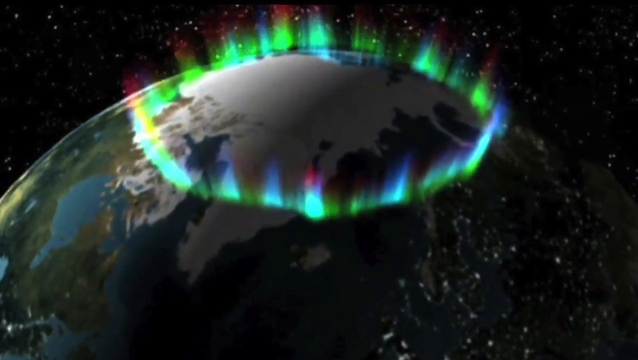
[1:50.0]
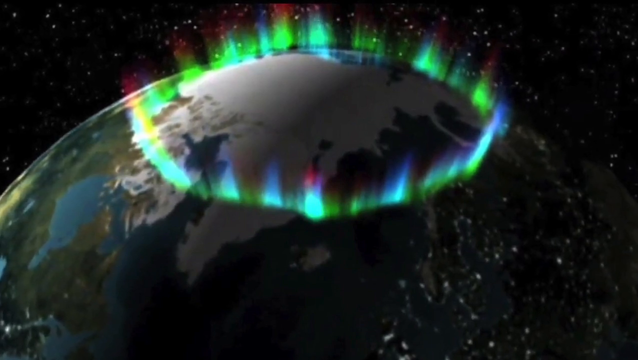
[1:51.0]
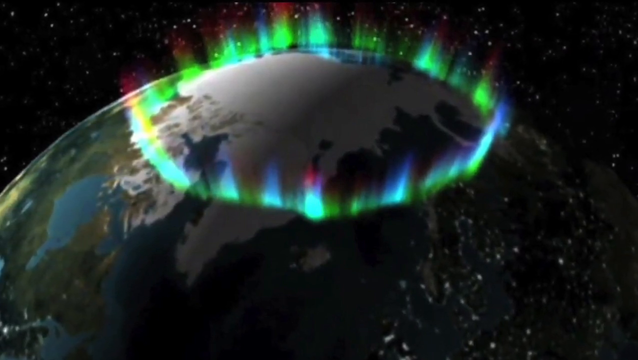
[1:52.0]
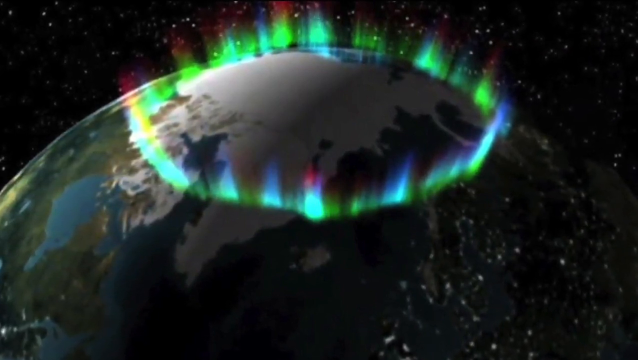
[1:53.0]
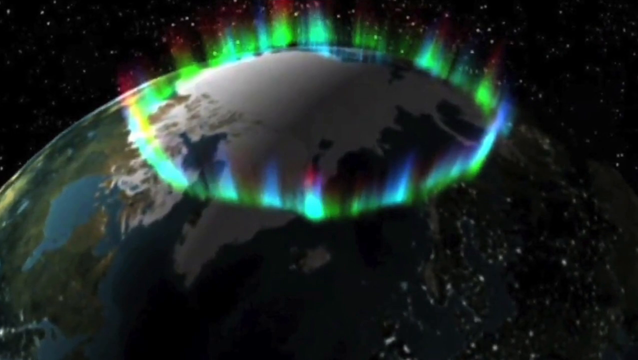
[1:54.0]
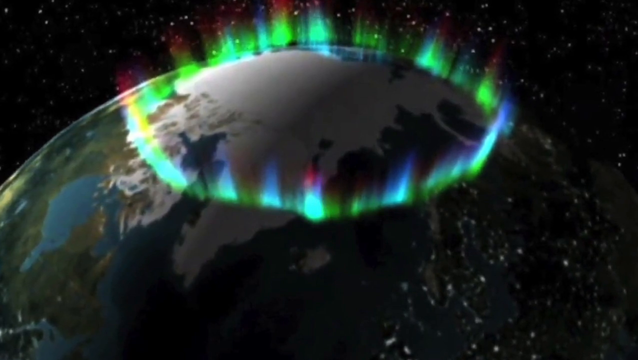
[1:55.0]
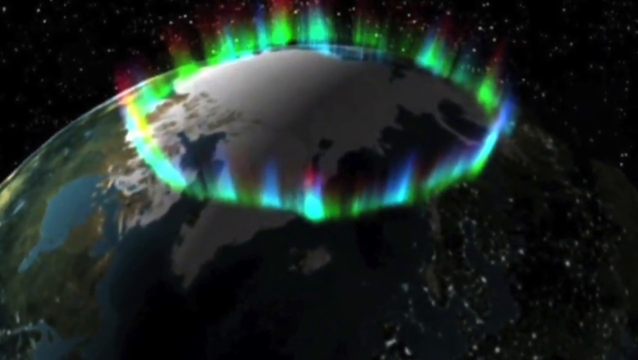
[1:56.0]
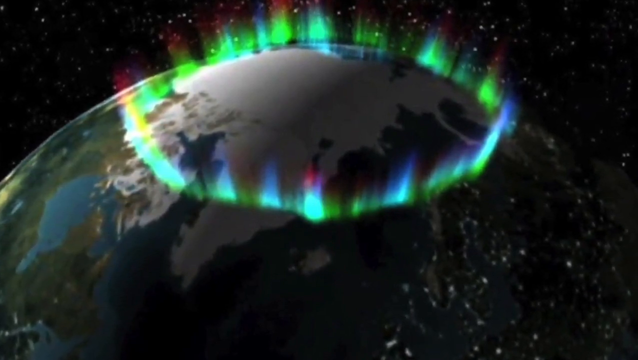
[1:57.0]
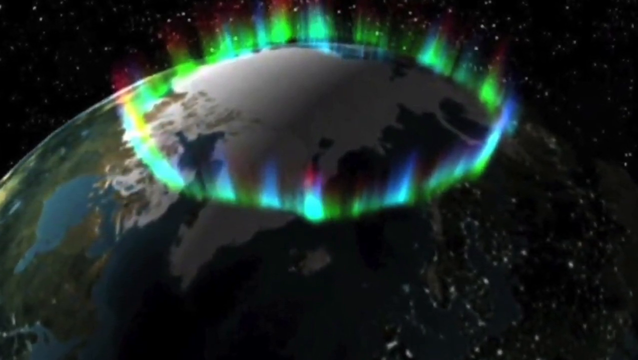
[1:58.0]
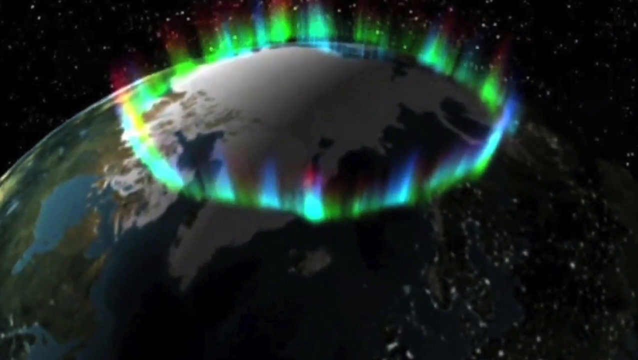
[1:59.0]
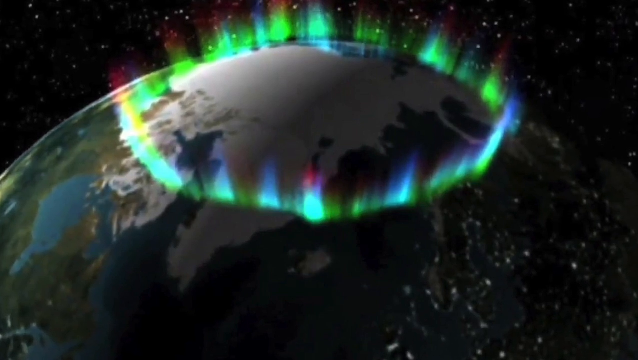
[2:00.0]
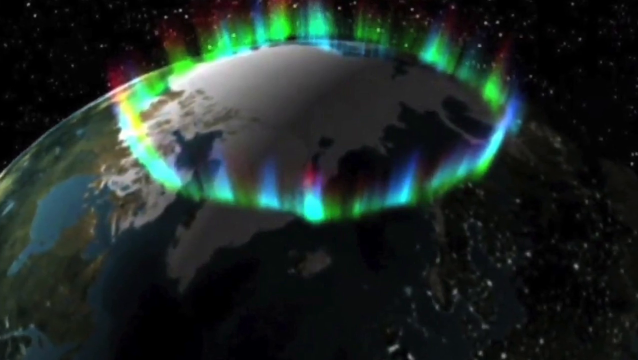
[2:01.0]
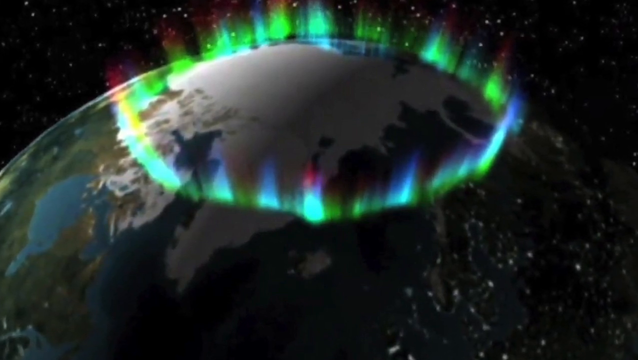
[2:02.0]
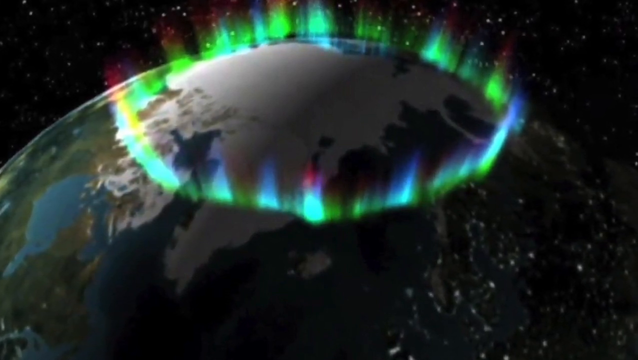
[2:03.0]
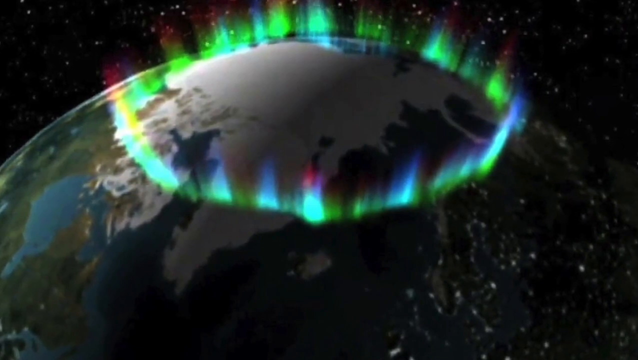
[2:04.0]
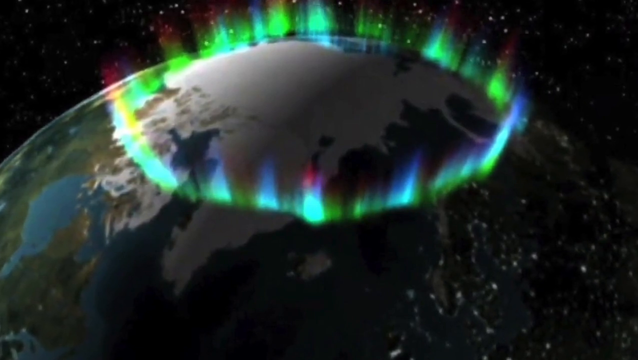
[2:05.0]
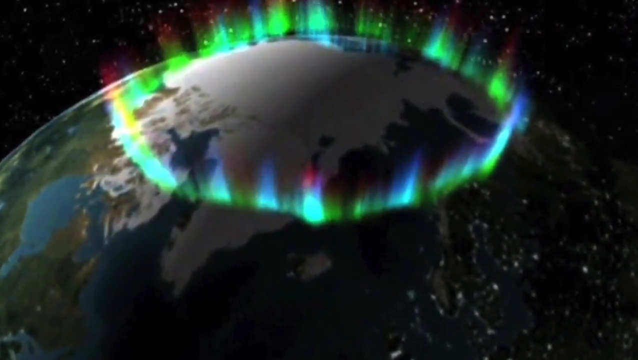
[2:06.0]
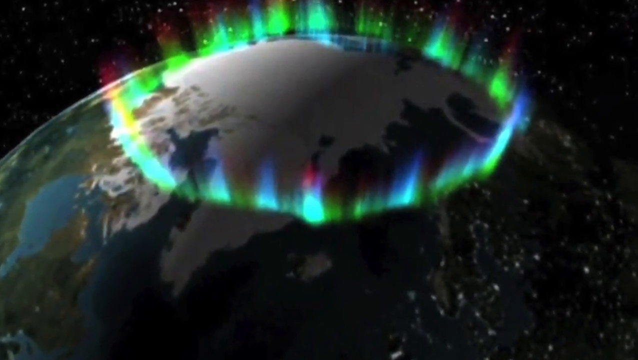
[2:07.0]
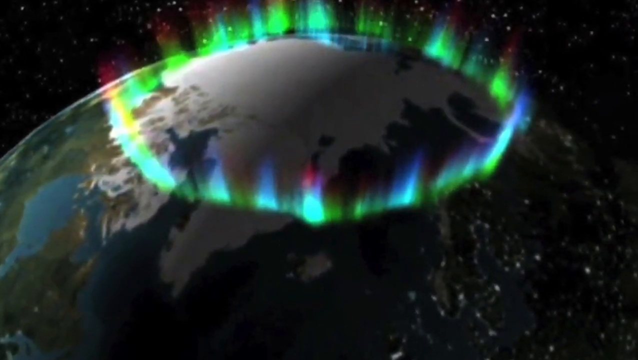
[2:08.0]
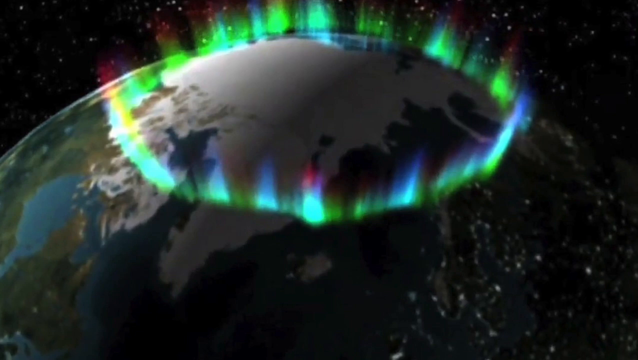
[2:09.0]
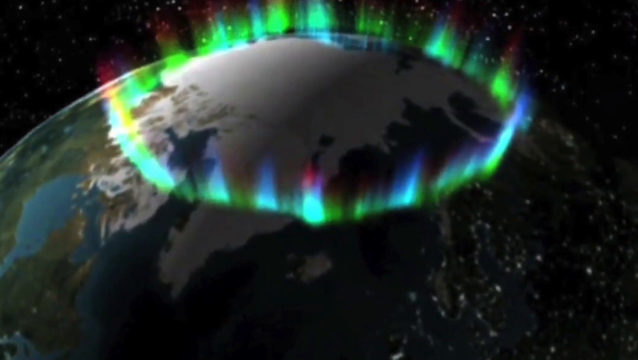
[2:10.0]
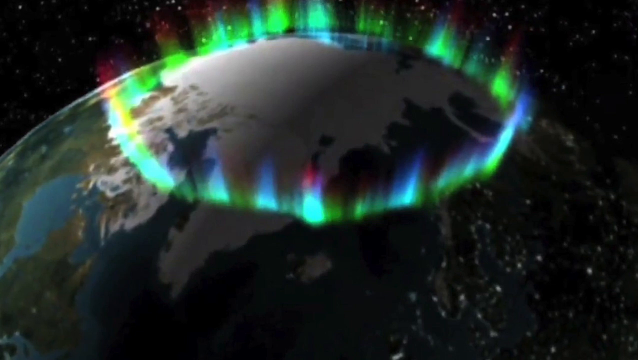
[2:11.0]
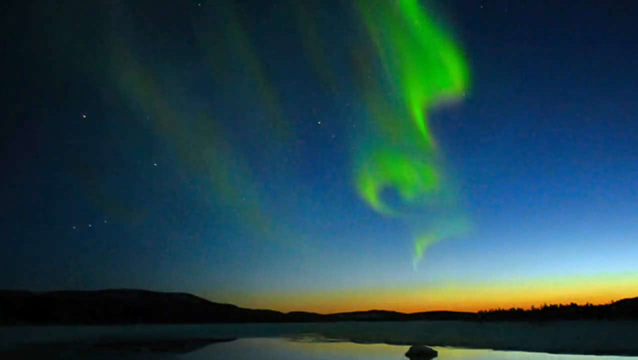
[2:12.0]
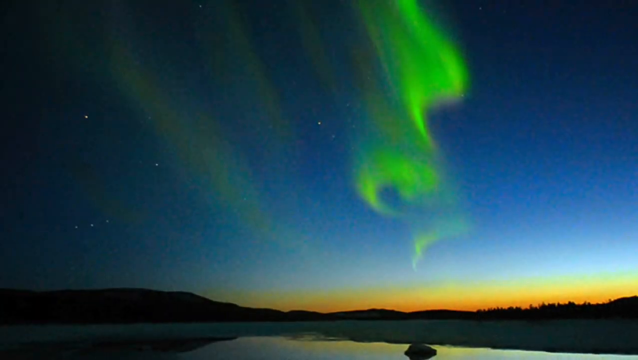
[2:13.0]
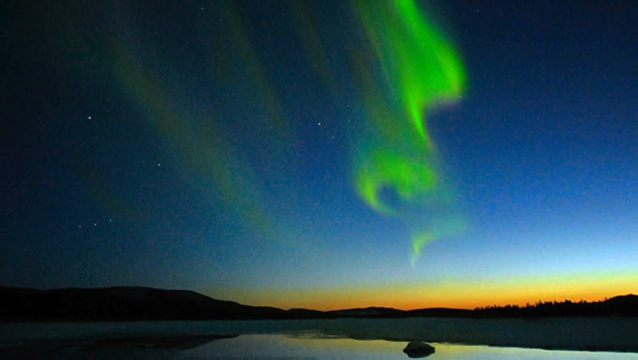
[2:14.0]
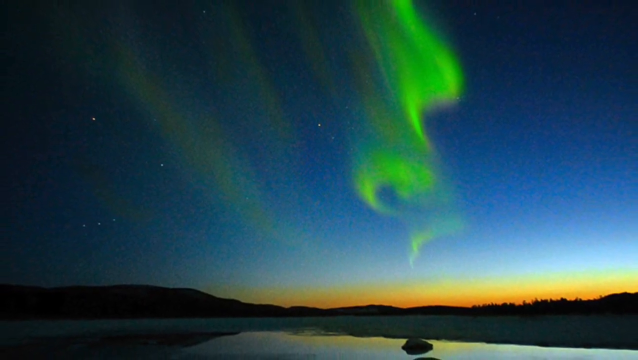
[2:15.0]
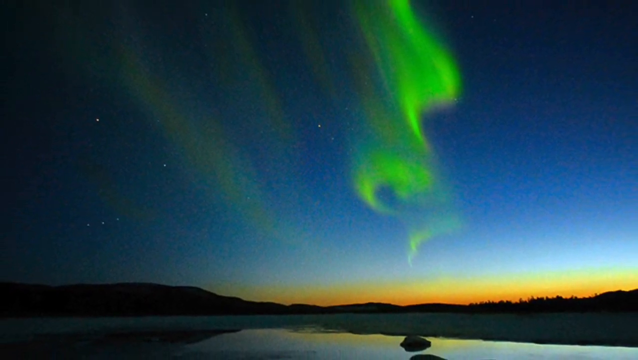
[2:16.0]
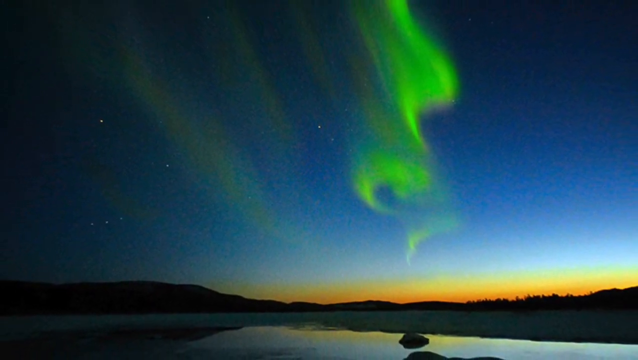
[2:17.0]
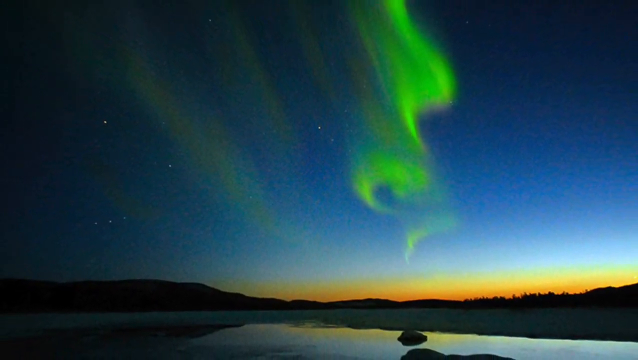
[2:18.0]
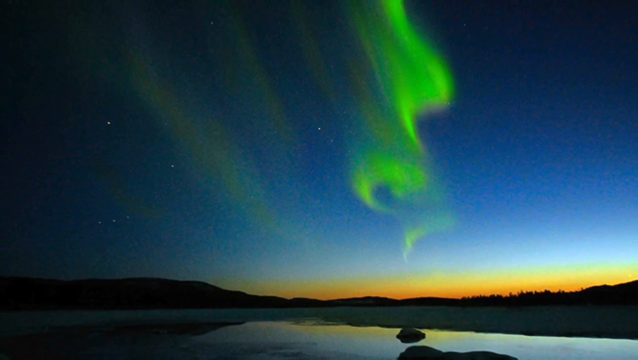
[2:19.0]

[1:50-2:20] The whole globe of the Earth is shown from space. On its northern part there is a ring that looks like a crown, with green, blue and purple colors, apparently representing the aurora's colors. Stars are visible in the background. Later, green lights that look like moving curtains or waves keep changing shape in the sky, with a few stars visible and an orange horizon, maybe from the sun setting. Purple and red are mixed with the green. The image moves in a way that seems like shrinking, but not zooming.